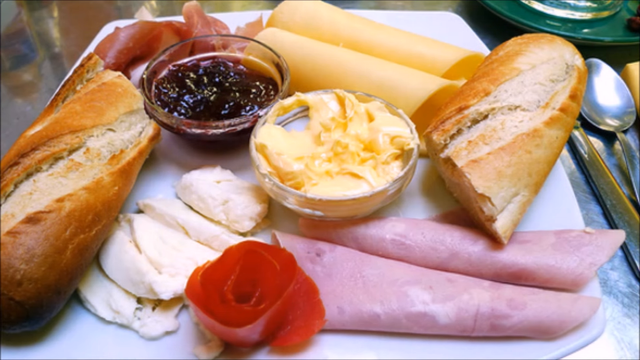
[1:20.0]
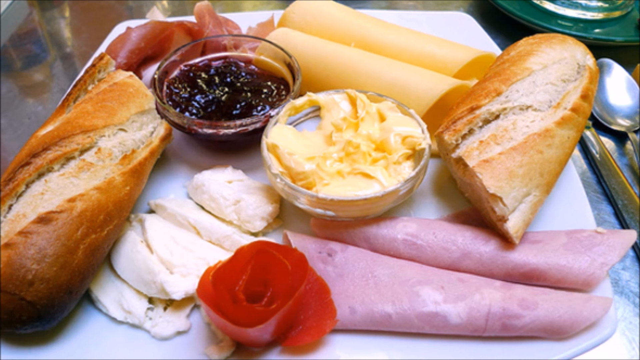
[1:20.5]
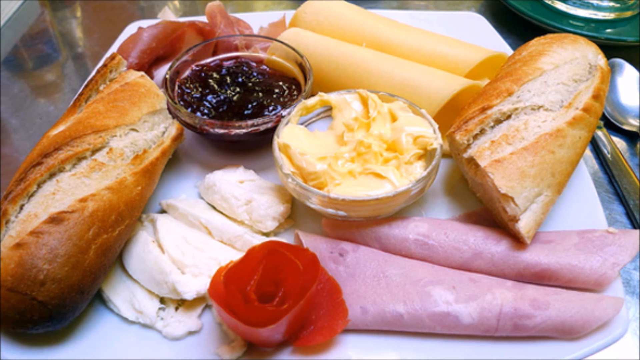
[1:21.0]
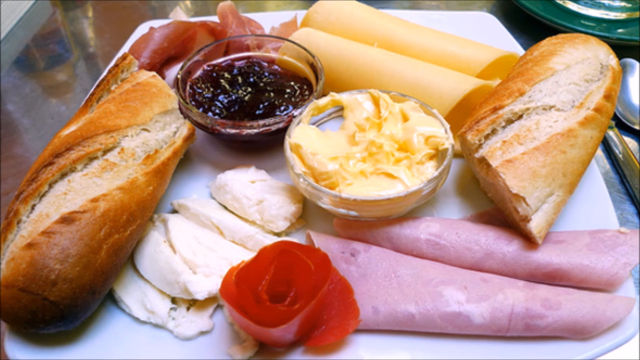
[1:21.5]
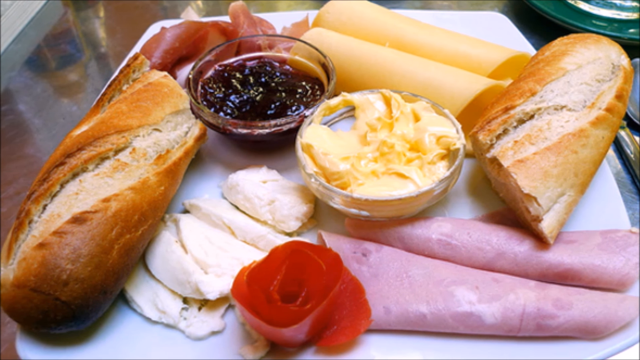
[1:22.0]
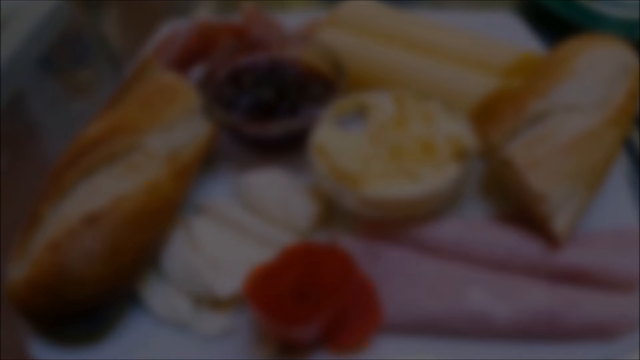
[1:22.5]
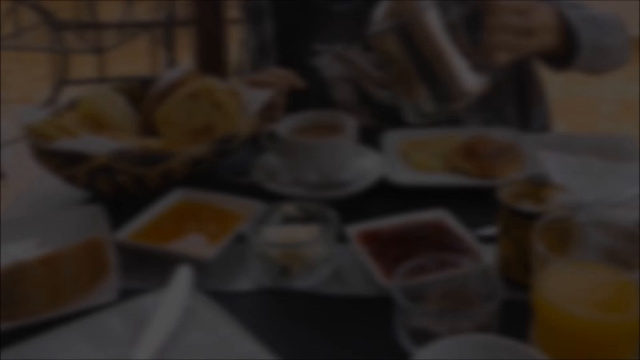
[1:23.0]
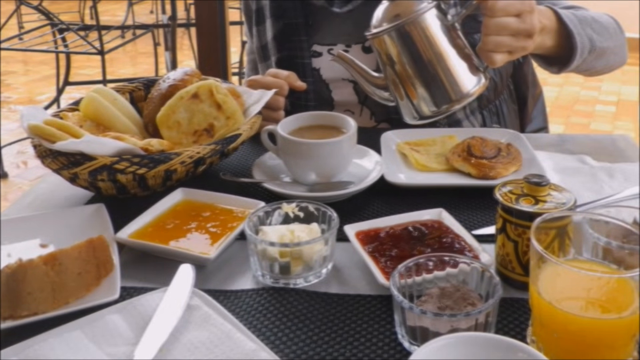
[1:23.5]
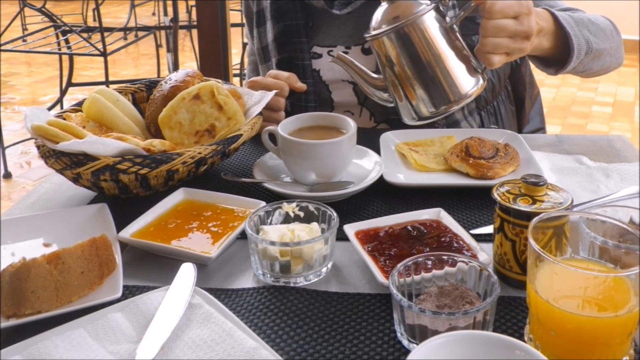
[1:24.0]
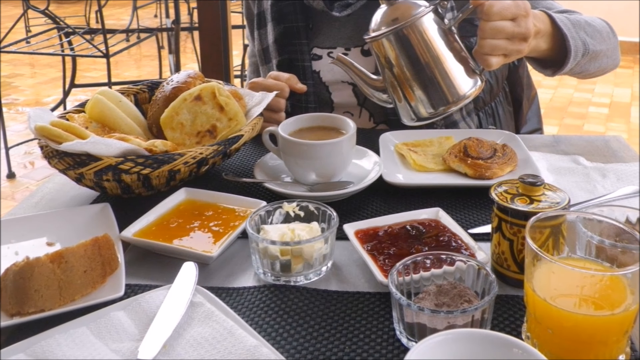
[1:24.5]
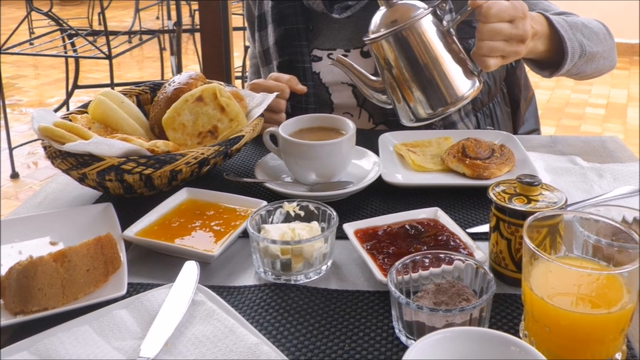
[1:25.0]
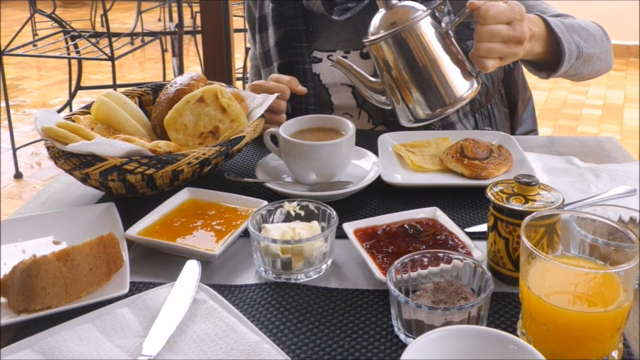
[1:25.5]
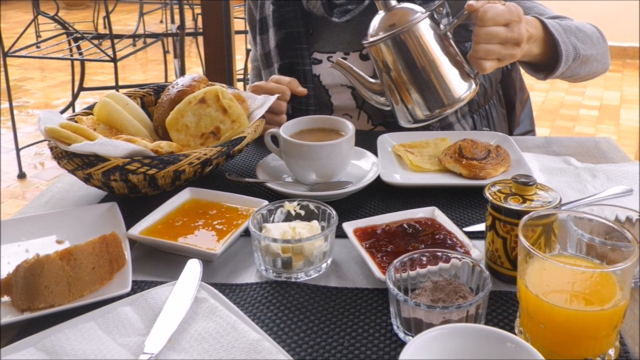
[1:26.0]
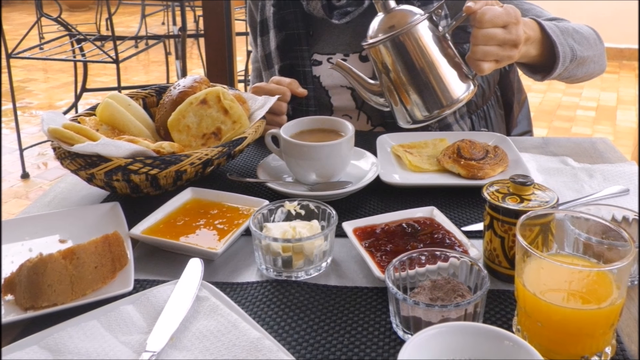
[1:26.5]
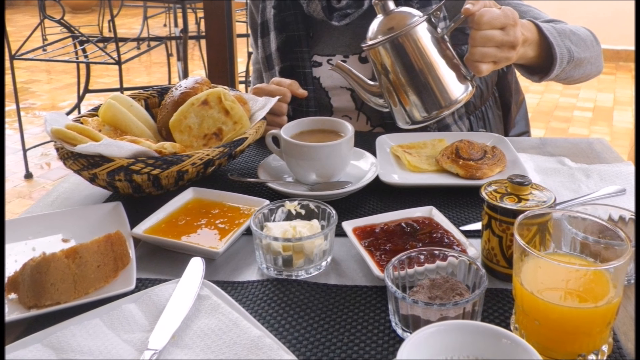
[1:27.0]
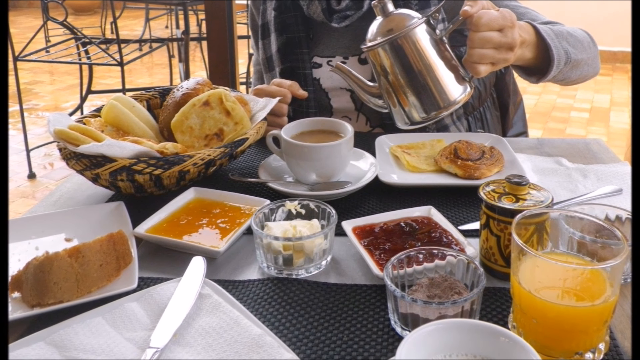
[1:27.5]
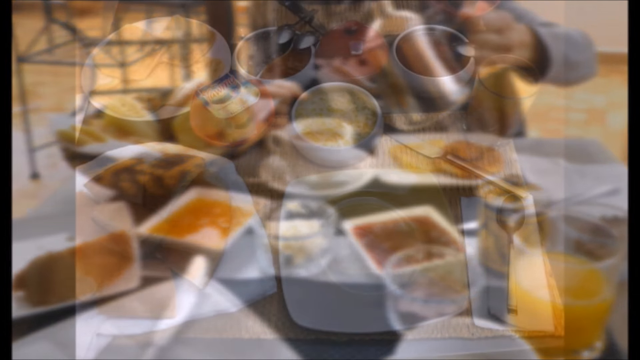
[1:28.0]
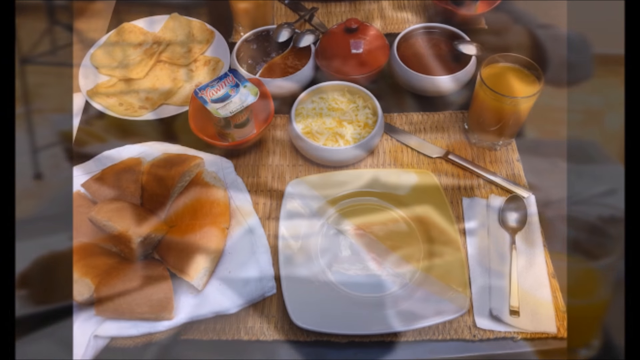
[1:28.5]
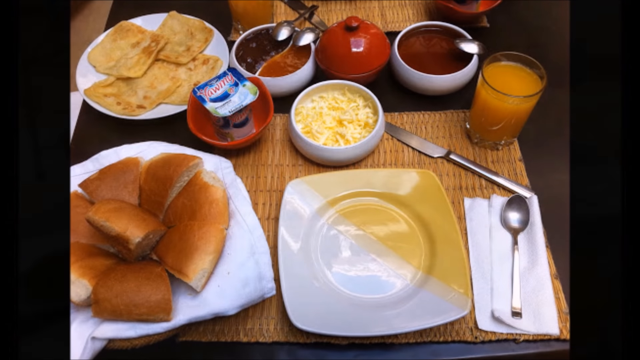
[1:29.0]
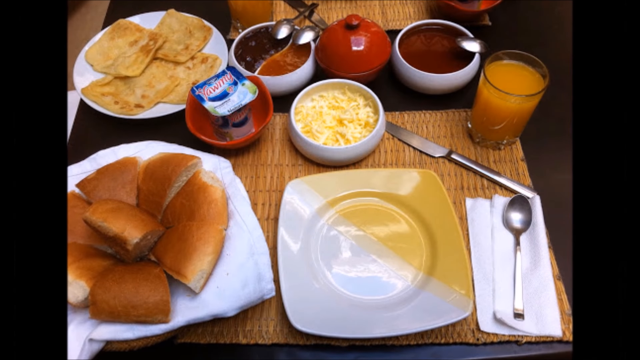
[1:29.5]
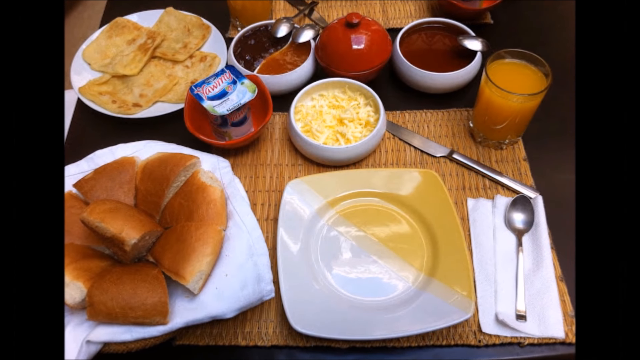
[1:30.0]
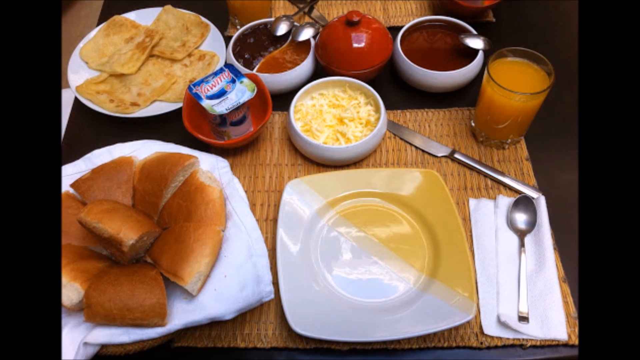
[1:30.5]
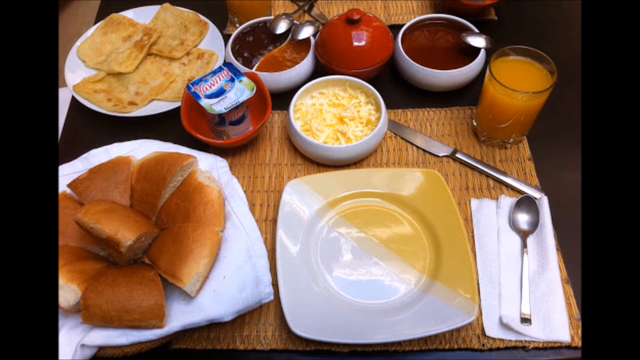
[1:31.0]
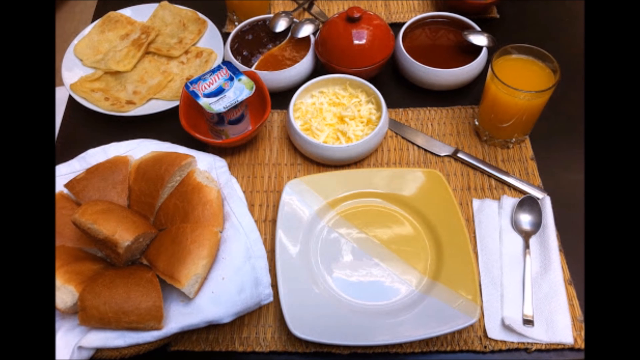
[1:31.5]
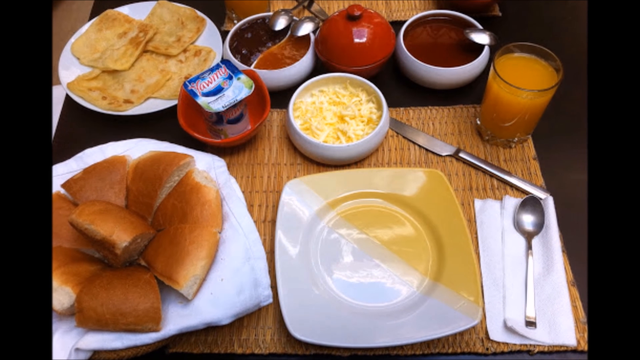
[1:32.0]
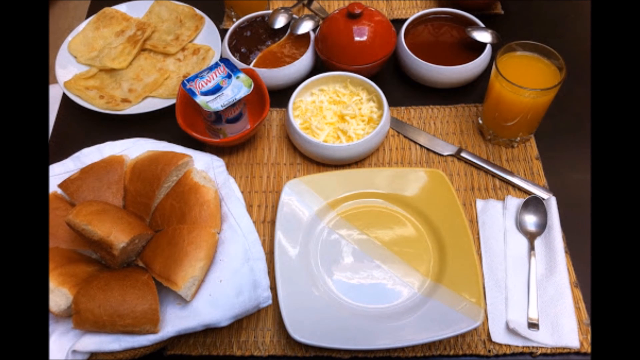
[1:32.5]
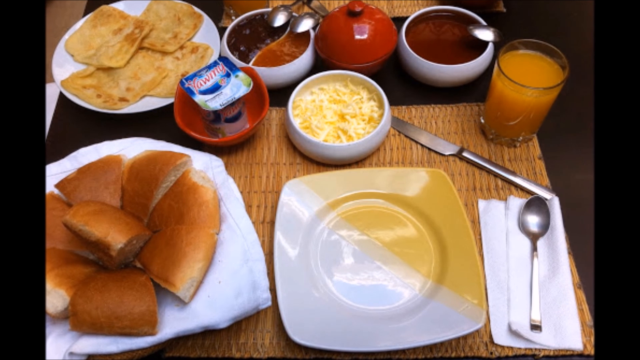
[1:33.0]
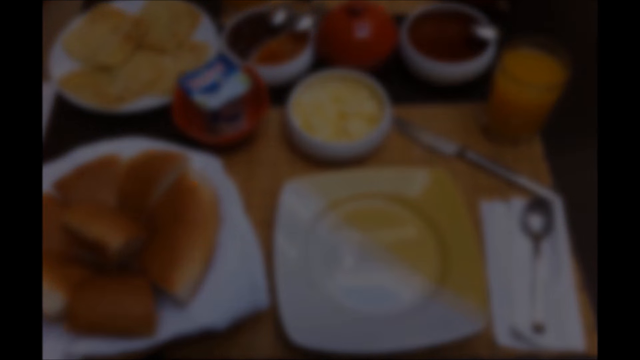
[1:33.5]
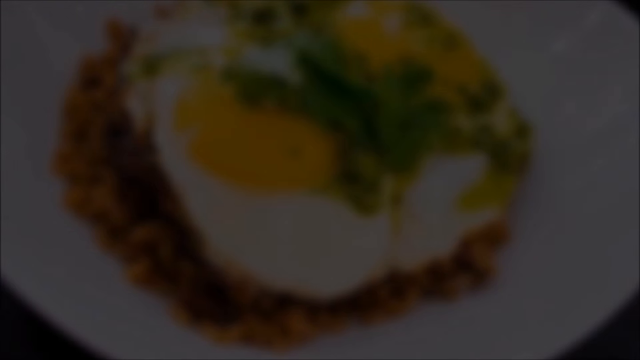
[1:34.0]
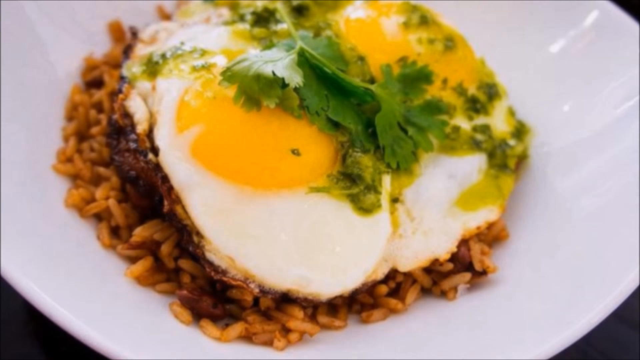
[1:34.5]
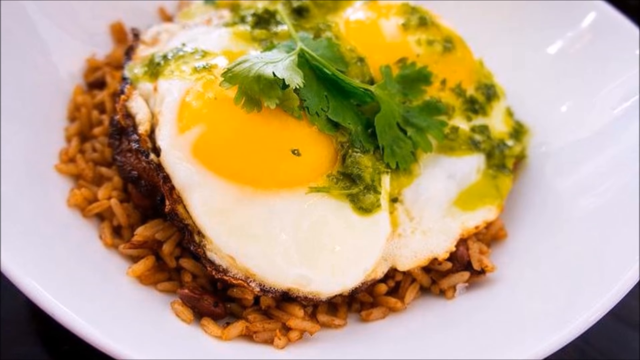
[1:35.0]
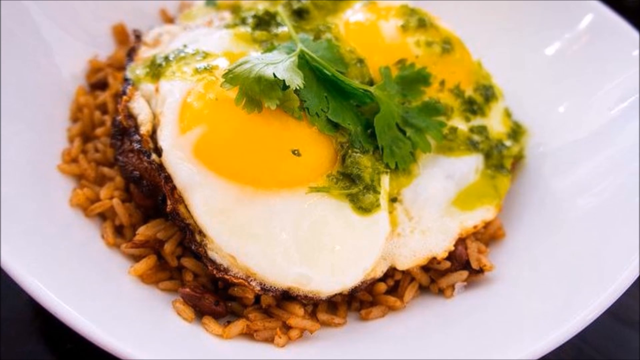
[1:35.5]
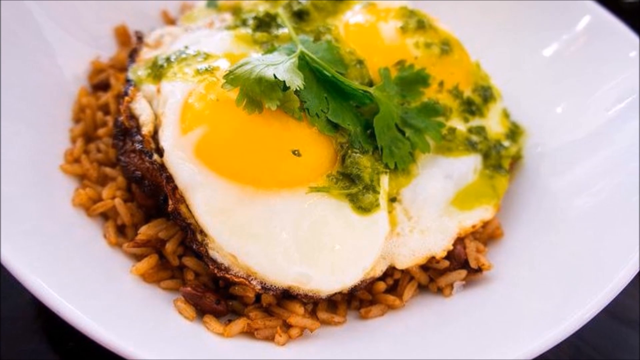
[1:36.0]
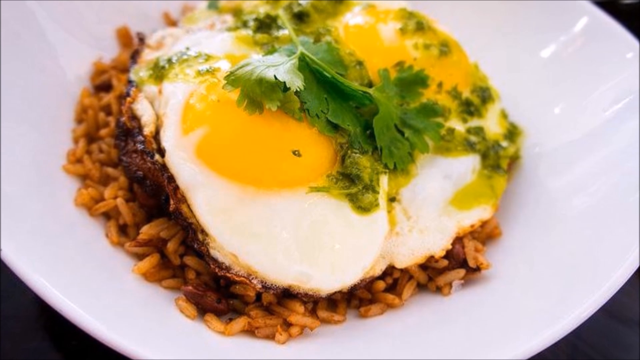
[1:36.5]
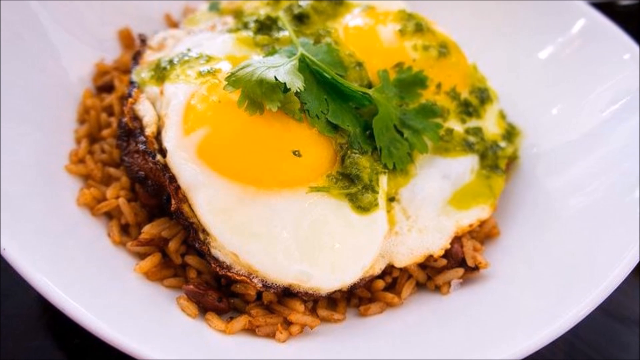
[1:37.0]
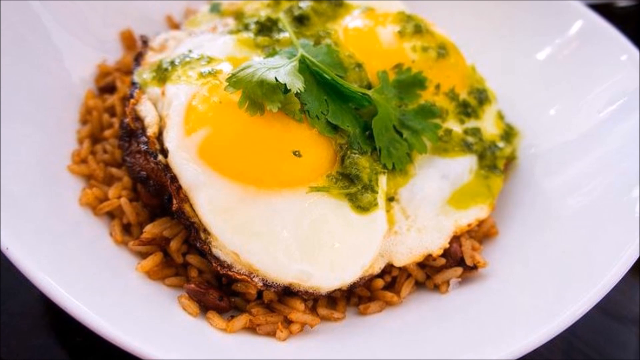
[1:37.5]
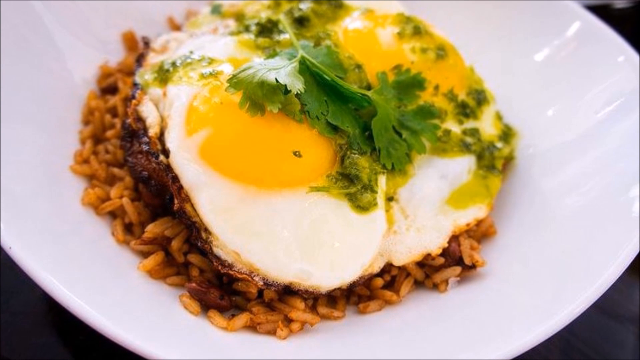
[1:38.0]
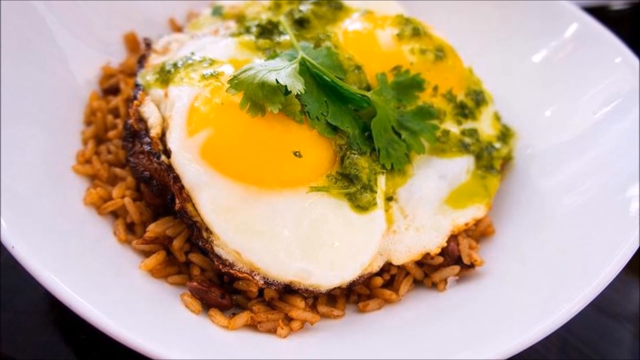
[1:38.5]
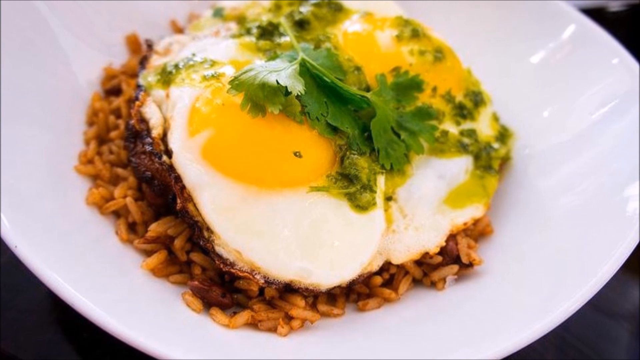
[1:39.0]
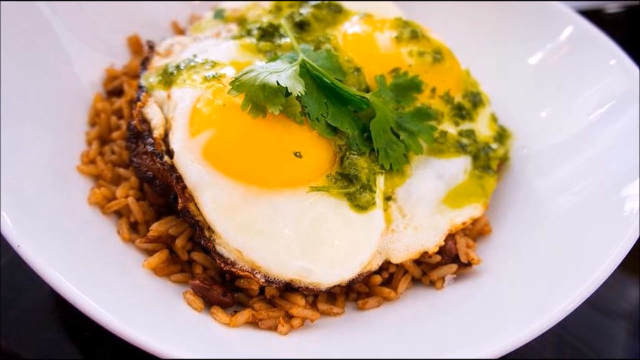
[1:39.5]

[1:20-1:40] On top of a white board there is half of a baguette on the left and the other half on the right. Above them are two rolls, and at the upper left is some cured meat. In the middle is a shallow transparent dish of jelly, and to its bottom right is a shallow transparent dish of butter. To the bottom right of the butter is sliced goat cheese; below the butter are a couple of rolled-up pieces of ham, and below that is some kind of rose-shaped piece of meat. To the right of the board are a knife and a spoon. The view pans to the left and fades to black. Next is a black table with two square plates at the bottom left, the upper one with a piece of bread on it. Above that is a square plate with marmalade; to its right is a glass ramekin with a piece of butter; to the right of that is a square plate with dark purple jelly. Below that is a glass ramekin with a grey-purple substance, and to the right of that ramekin is a glass of orange juice. Above that is a cylindrical container with an ornamental yellow design, and behind it are a knife and a square plate with a pastry. To the left of that plate is a cup of coffee in a white mug on a saucer with a spoon on it, and to the left of that is a woven black and beige basket filled with different types of bread. Above that are the hands of a person wearing grey, making a motion to pour the contents of a kettle into the coffee cup, and the view zooms out. It fades to a straw placemat. At the bottom left is a bread basket with a white cloth in it and a piece of bread cut into eighths. To the right of that is an empty square plate with a round recession, and to its right is a napkin with a spoon on it. Above that is a butter knife directly on the mat, and to its left is a round cup of butter. To the left of that is an orange cup with an individual carton of yogurt in it. At the upper left is a white dish with pieces of flatbread; to its right is a divided round dish with two different types of chutney and two spoons; to the right of that is a closed spherical orange container; and to the right of that is another circular bowl with a brown liquid and a spoon hanging out of it. The view zooms out, and an image fades in of a fried egg with parsley on top of dirty rice on a white plate, which slowly zooms out.